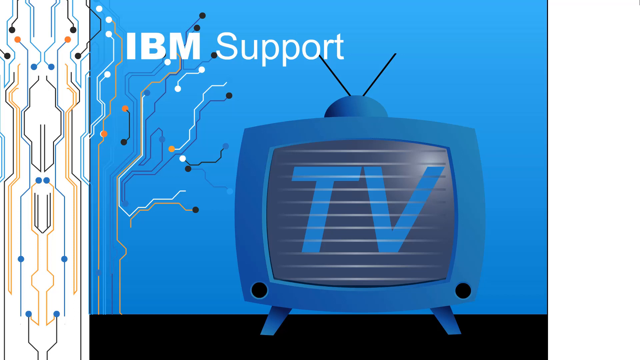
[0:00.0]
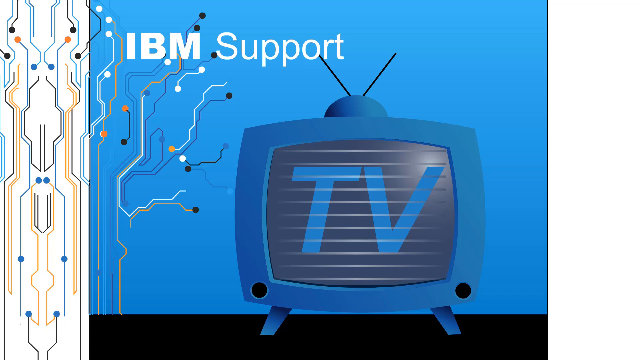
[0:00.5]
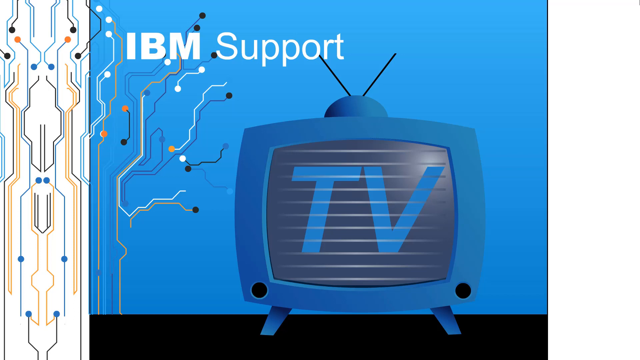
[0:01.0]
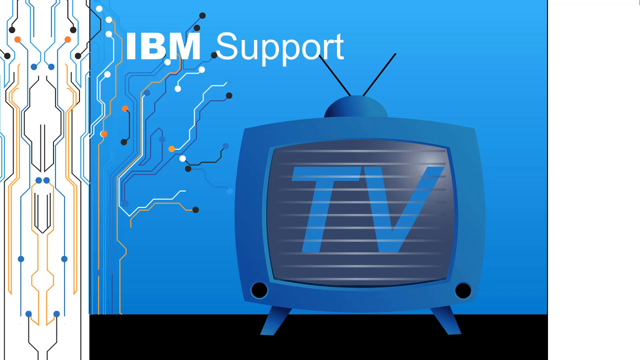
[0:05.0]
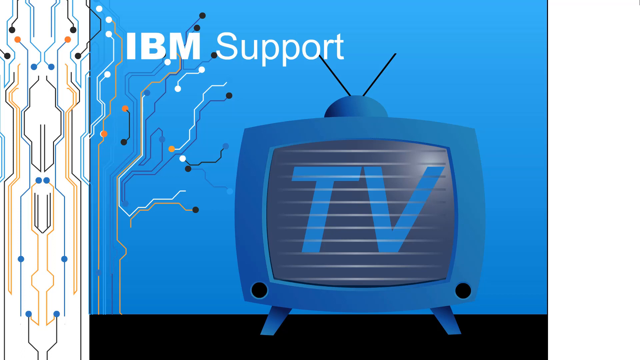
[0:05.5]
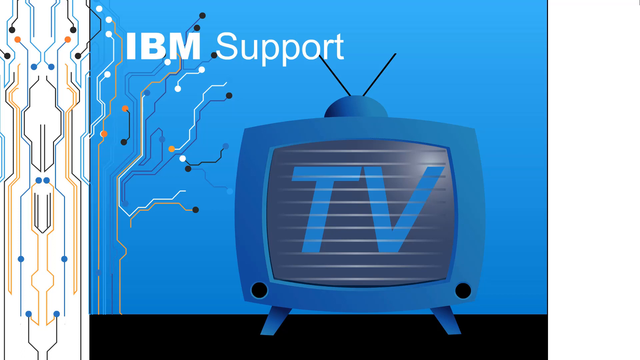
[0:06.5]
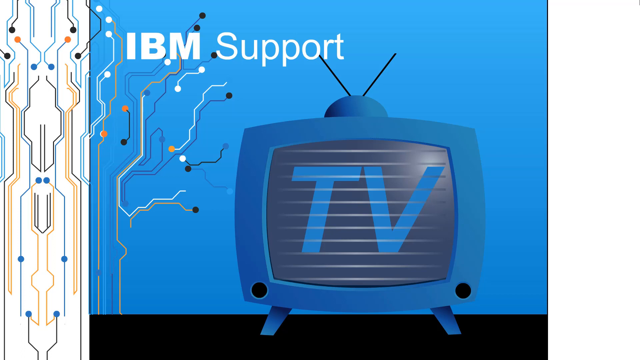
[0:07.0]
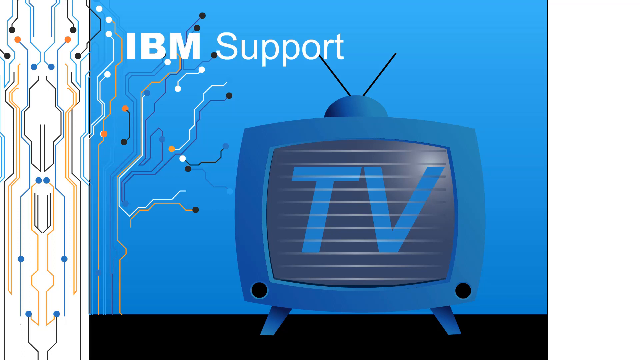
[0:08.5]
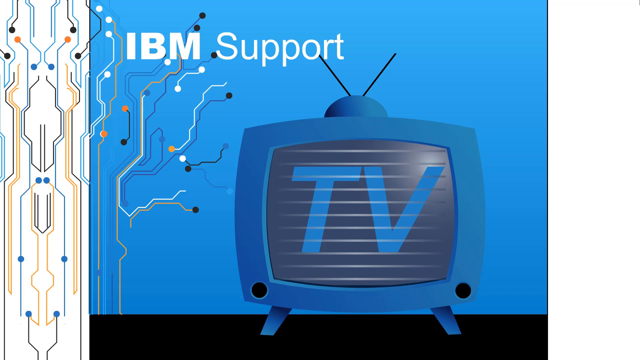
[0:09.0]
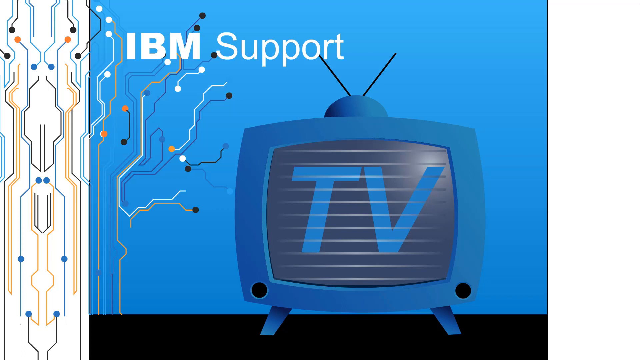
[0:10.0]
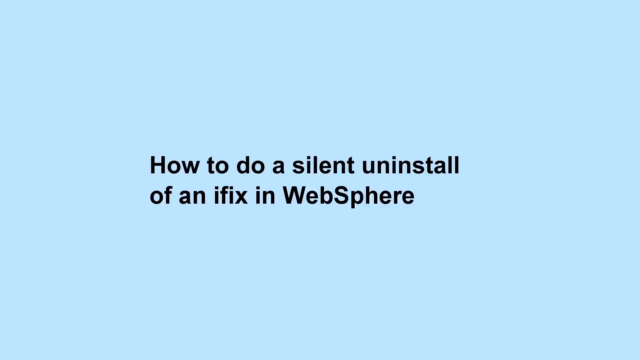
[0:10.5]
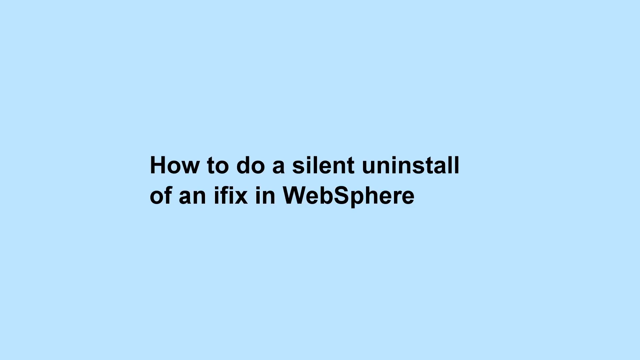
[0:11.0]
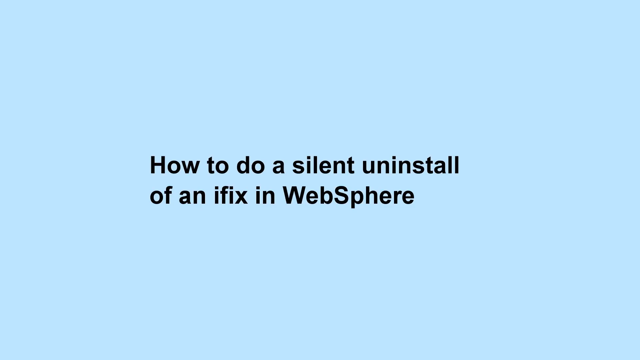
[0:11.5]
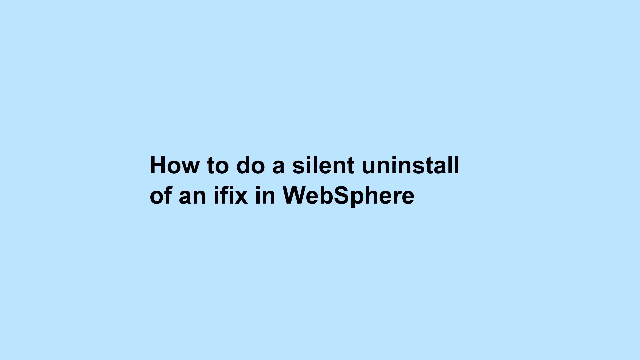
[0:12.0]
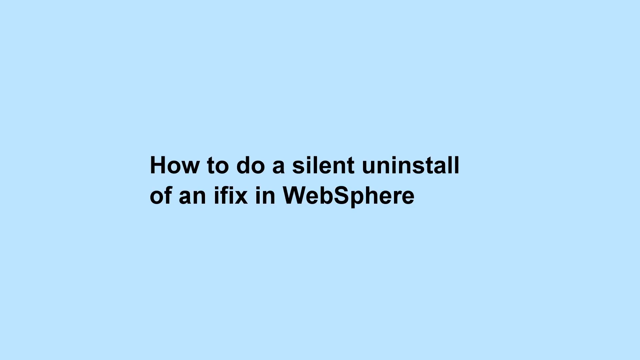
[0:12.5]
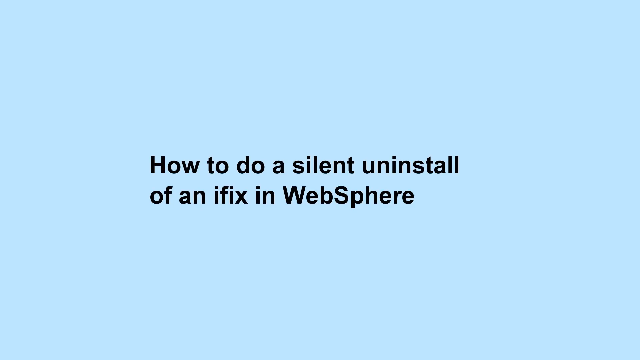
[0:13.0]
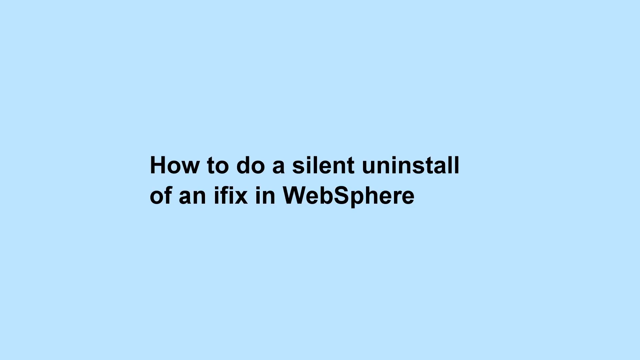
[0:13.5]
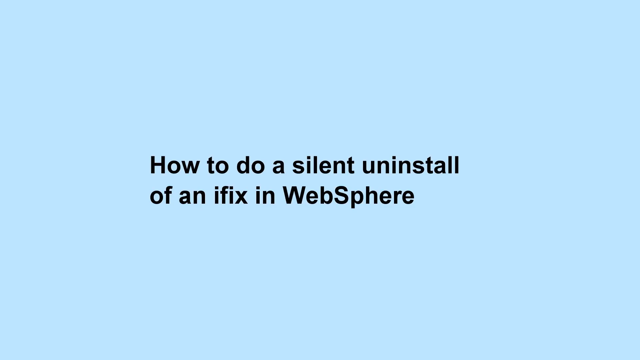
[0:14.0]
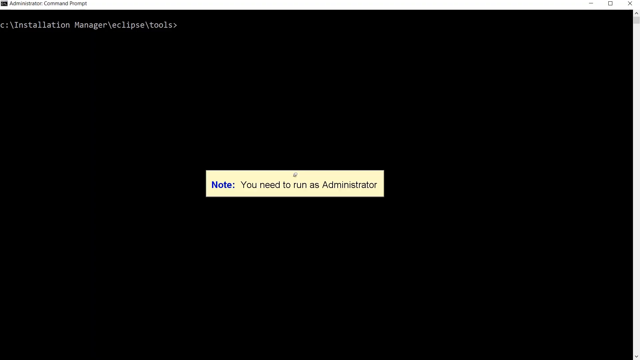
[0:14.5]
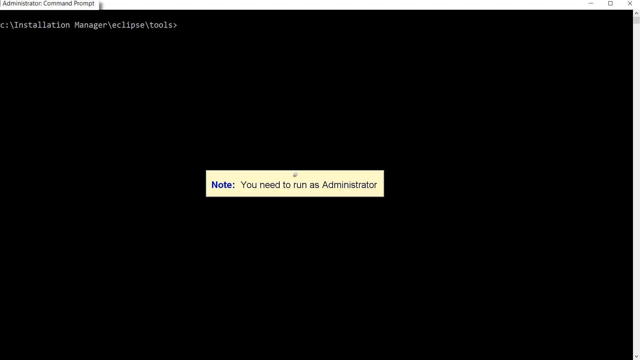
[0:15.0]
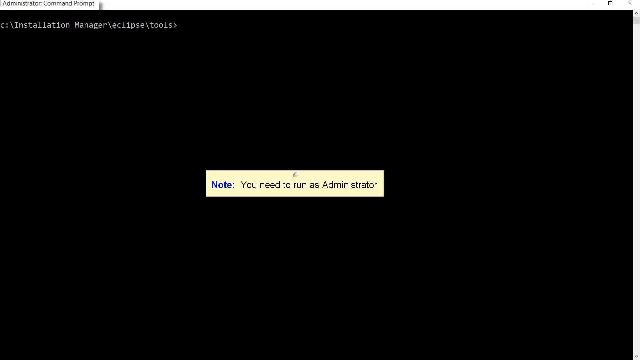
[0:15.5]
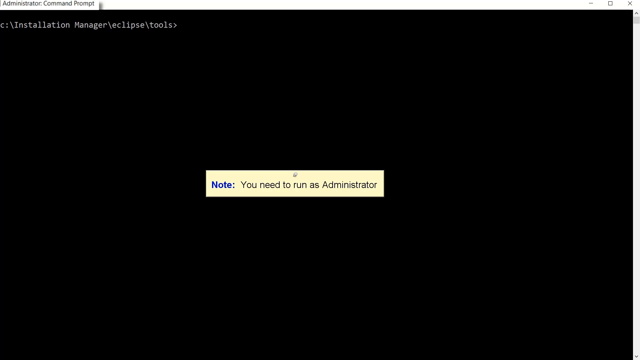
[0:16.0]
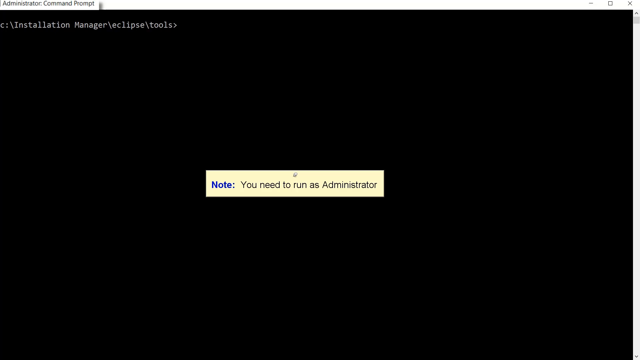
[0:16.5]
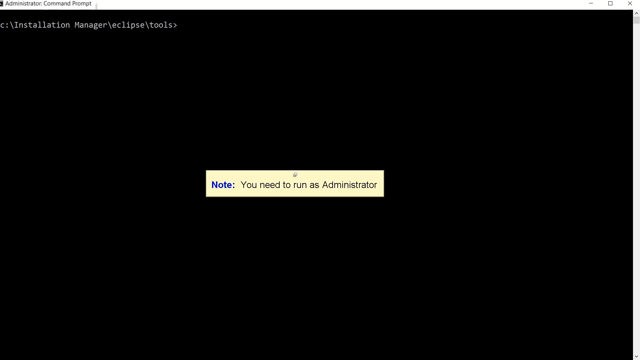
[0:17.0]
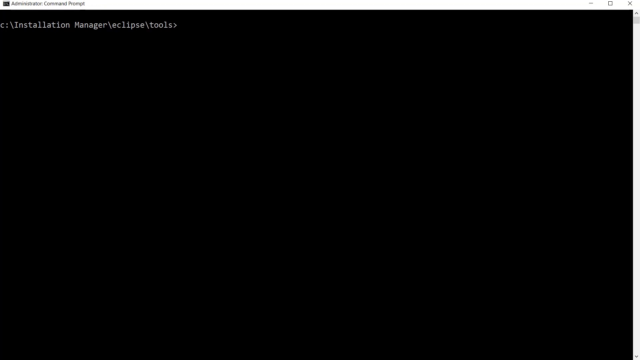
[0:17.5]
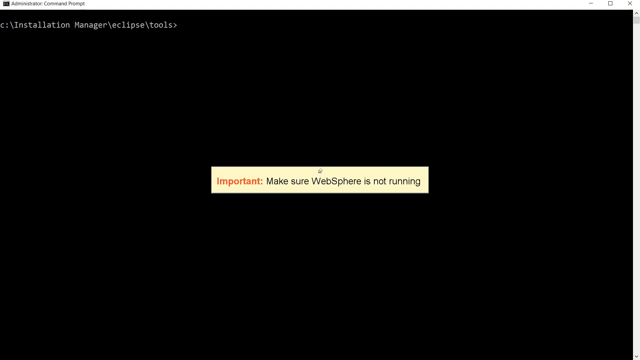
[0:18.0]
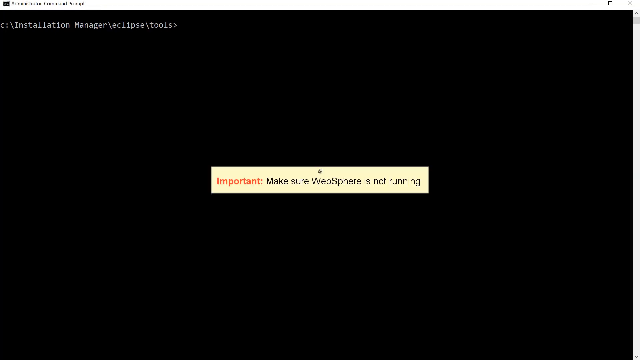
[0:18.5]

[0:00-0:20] The image is a split screen with a solid gray background in the back. Off to the left is a gray background with multicolored lines, including blue, orange, dark blue and yellow. In the center of the screen the text reads "IBM support", and there is a television set with two knobs, two little antennas coming out of the top and the word "TV" on it, all located inside a blue box with a black outline. The TV appears to be standing on a table. Next comes an image with another gray background, which goes over to a screen, and the shot finishes with some text in the center of the screen on a solid pitch-black background with basically no other visuals.